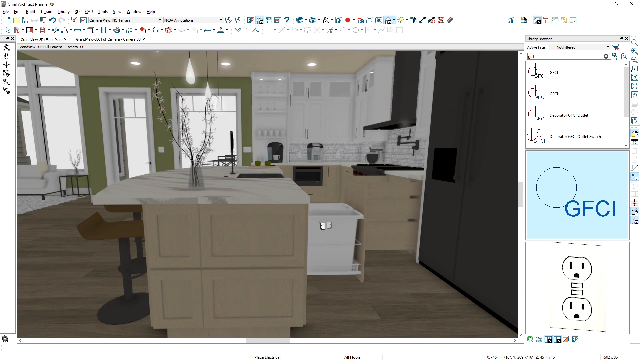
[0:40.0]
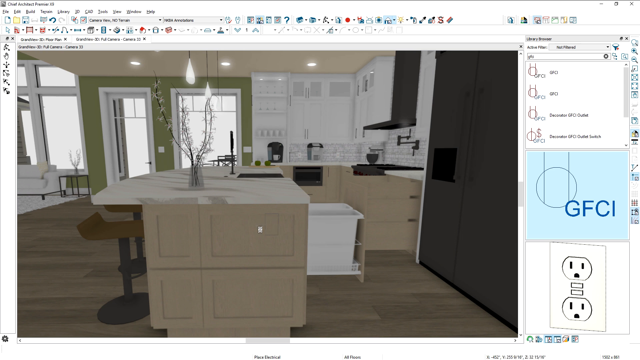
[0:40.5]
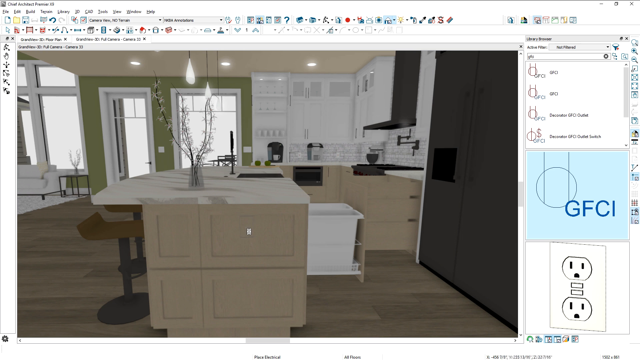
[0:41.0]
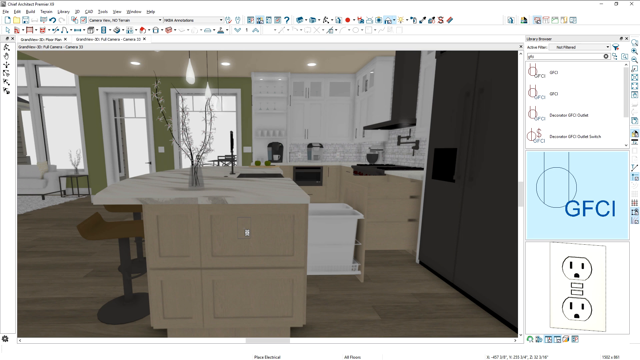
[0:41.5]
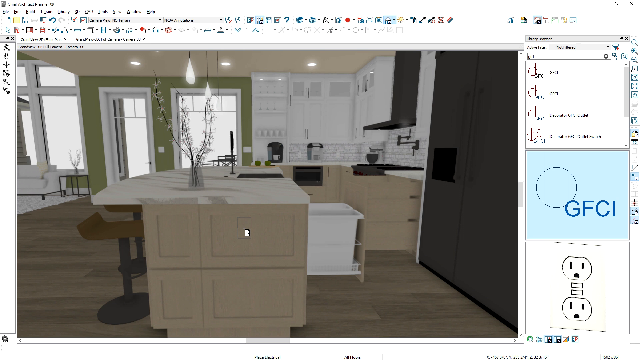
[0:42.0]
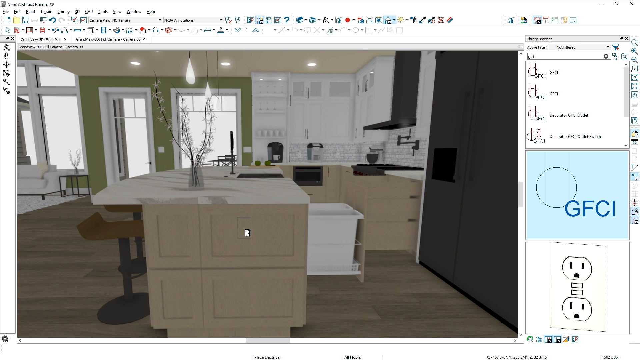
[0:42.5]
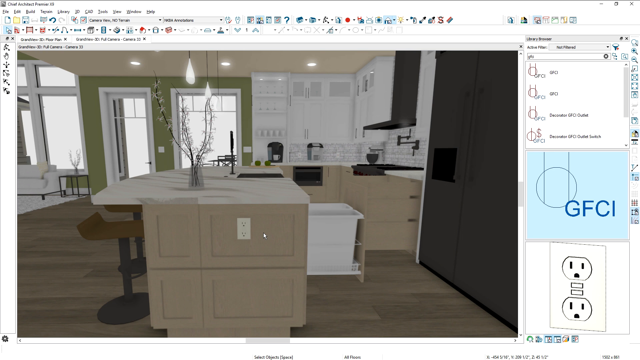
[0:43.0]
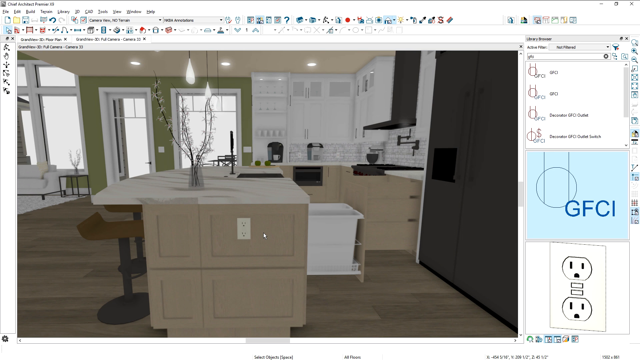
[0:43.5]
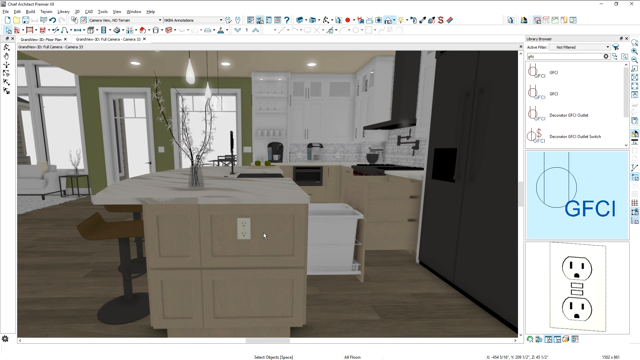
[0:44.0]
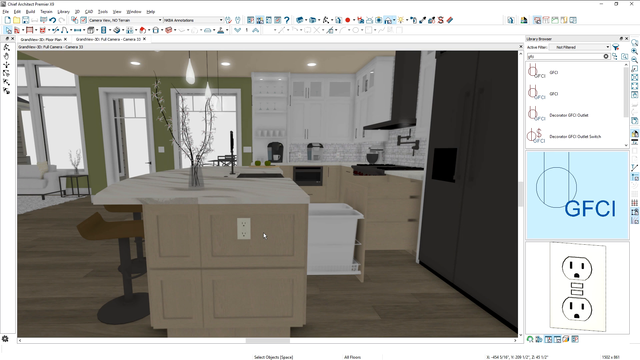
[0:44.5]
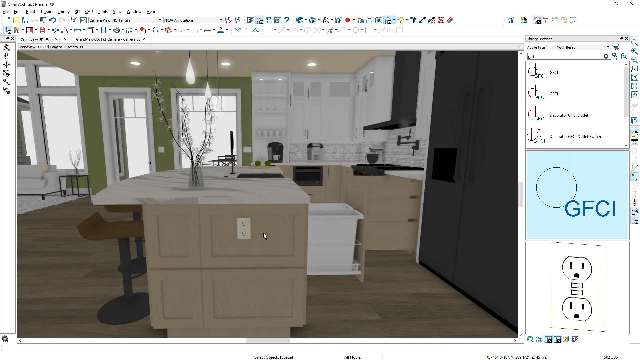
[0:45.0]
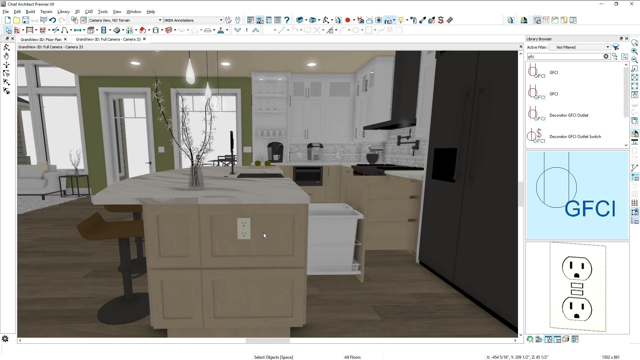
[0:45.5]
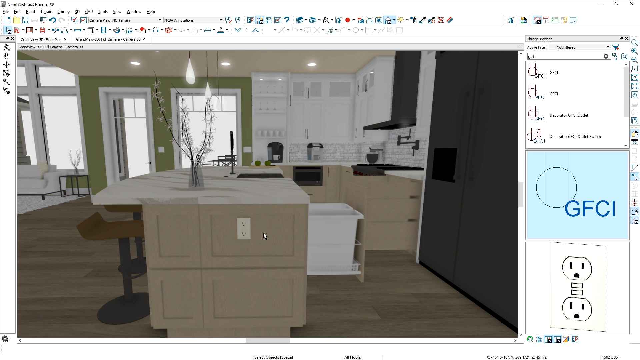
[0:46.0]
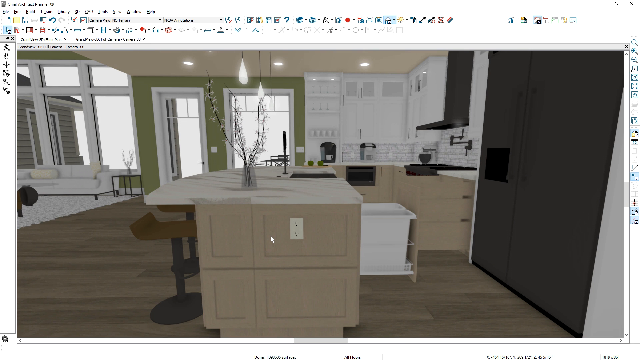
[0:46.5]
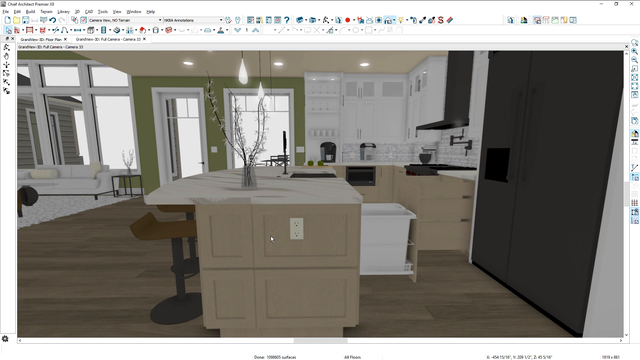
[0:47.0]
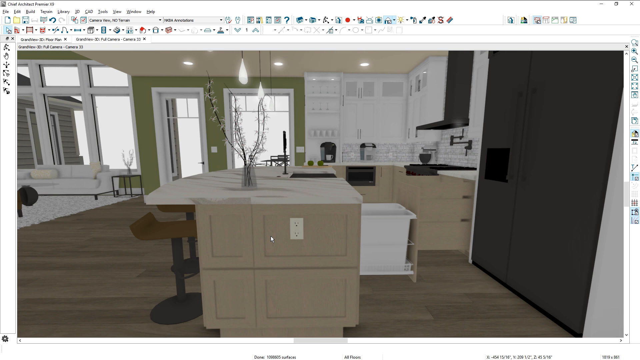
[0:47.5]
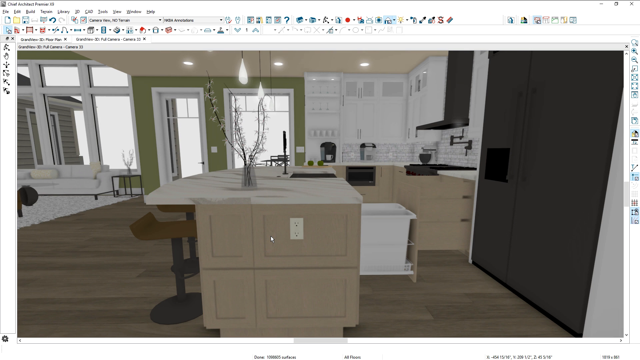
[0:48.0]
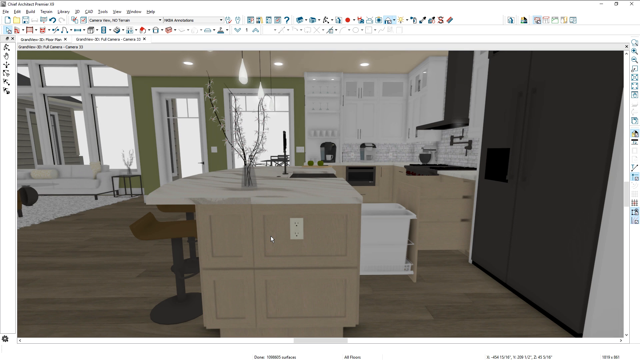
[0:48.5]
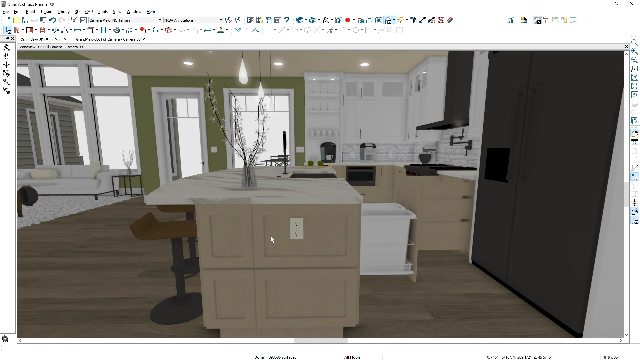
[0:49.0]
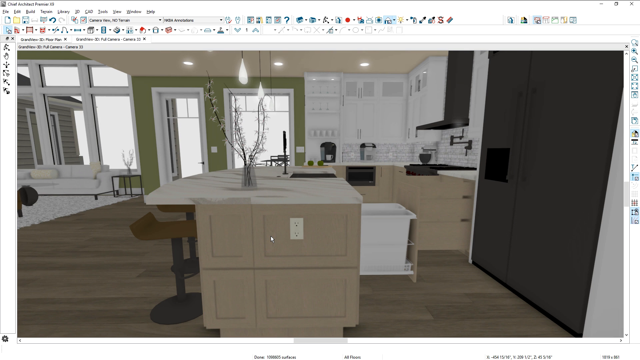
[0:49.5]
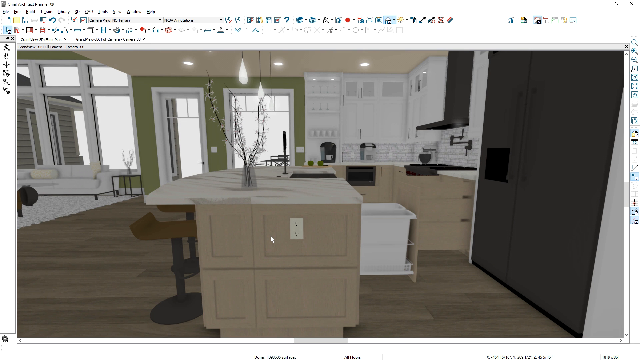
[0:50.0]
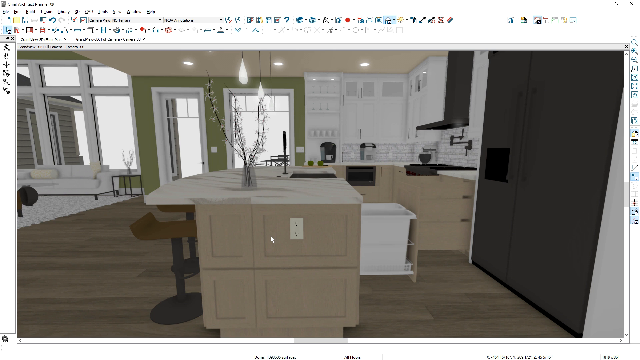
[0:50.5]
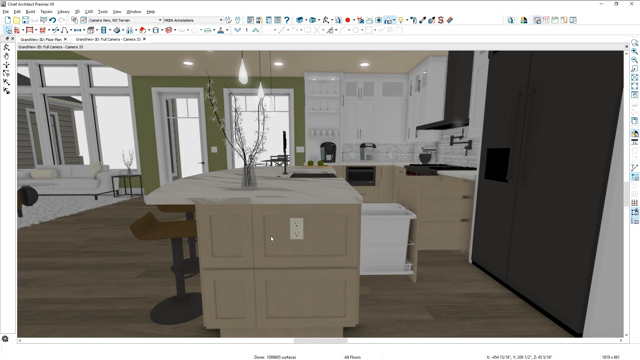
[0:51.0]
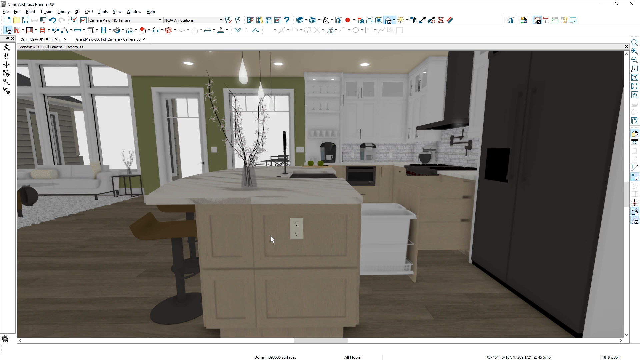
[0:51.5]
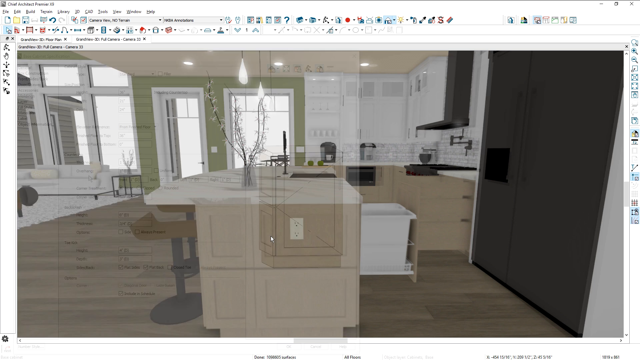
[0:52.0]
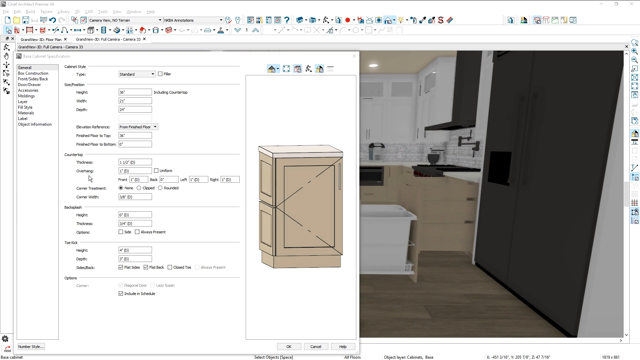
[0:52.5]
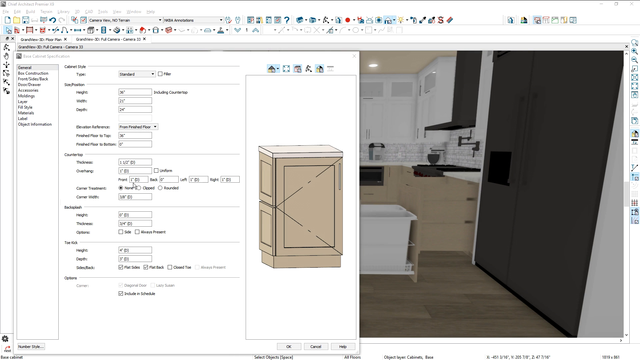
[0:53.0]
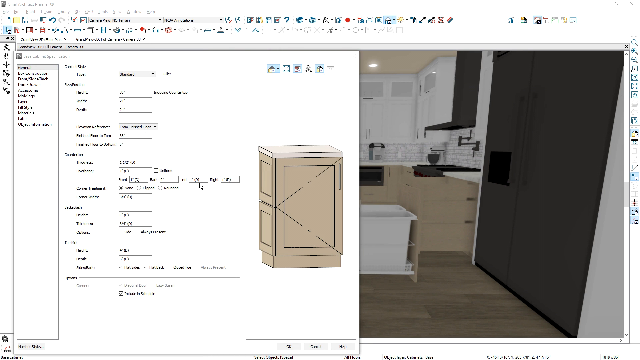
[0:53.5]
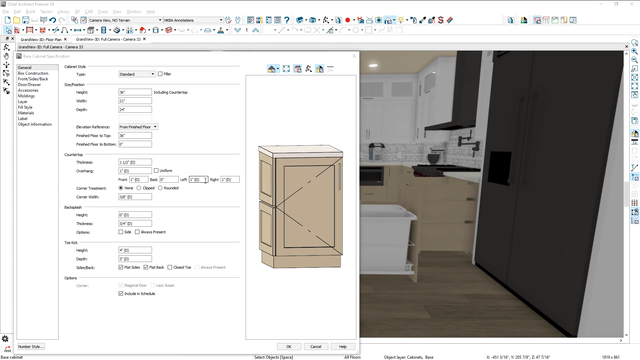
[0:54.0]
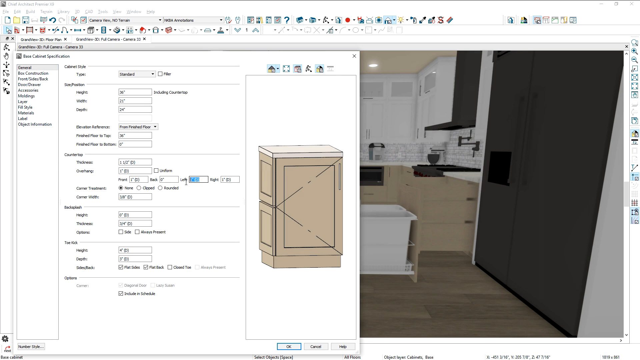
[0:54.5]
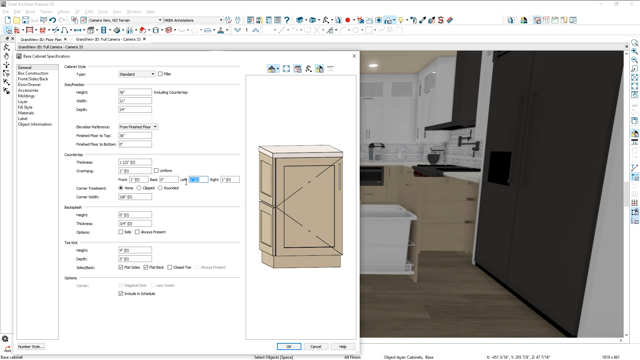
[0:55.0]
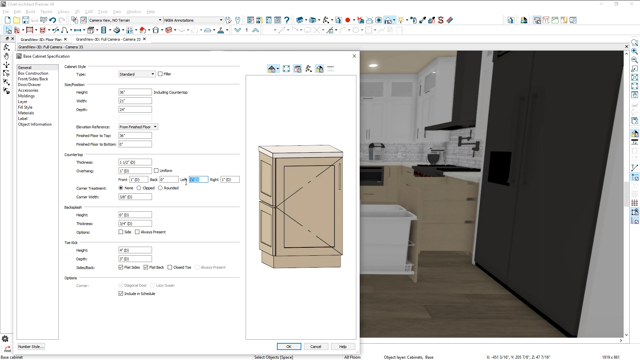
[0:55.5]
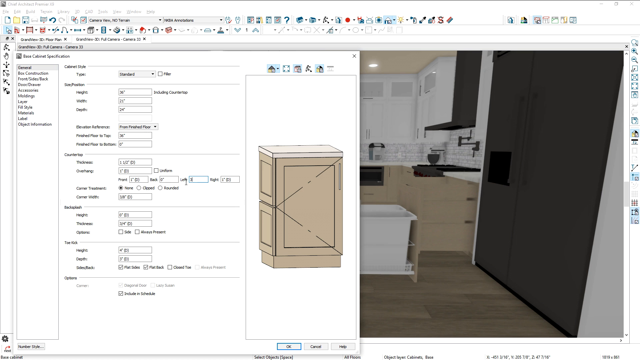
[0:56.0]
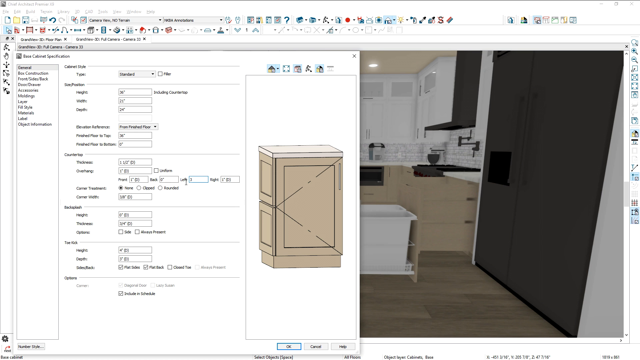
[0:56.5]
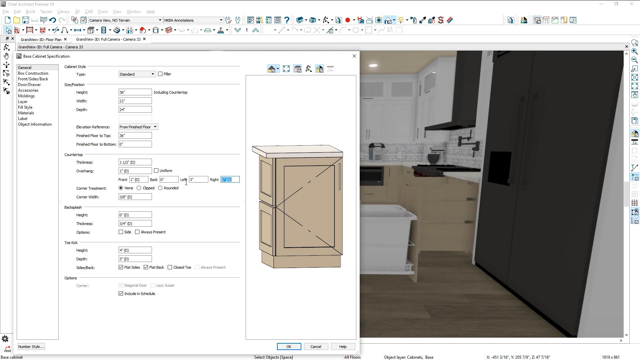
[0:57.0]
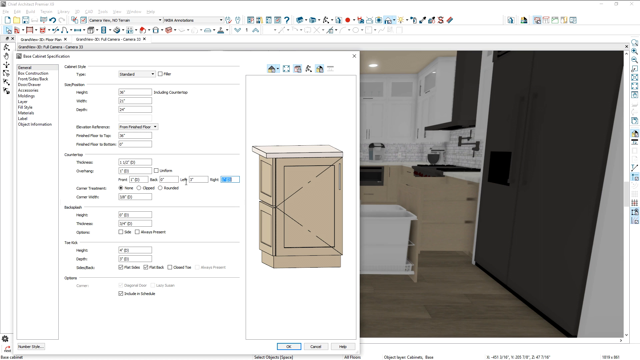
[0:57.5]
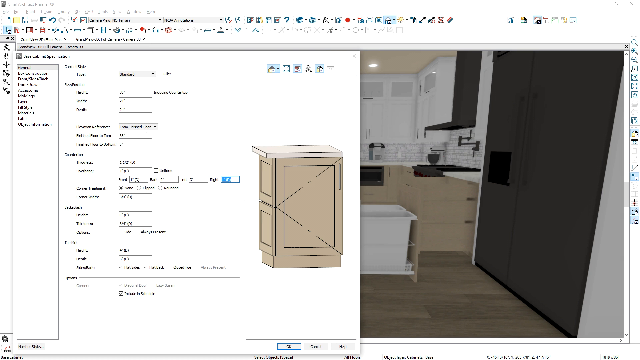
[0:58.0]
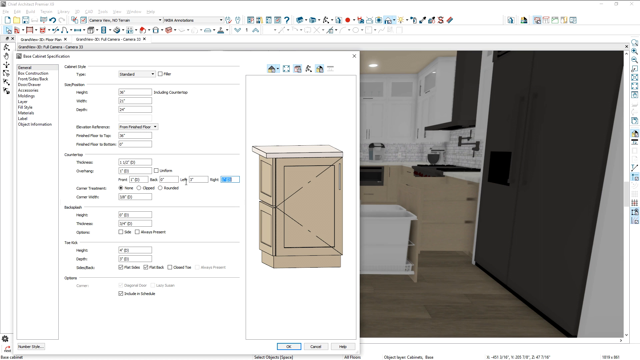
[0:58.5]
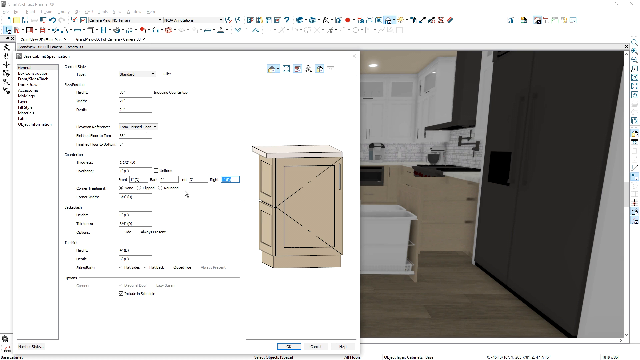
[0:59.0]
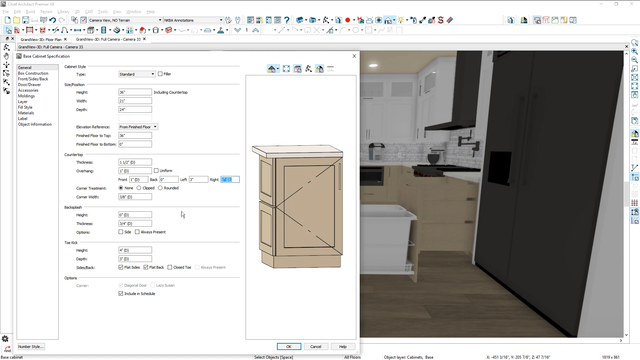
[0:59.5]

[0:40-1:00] A design of the same kitchen is shown, with plugs in front of the bar stools. Someone is editing the house plans and removing some items. The model of the kitchen looks like it is not finished yet. There is a chest of drawers with a small design on it, a rectangle and a square. Lights hang from the ceiling, and other lights are set straight into the ceiling. A drawer at the bottom of the sink or breakfast table can be opened; it looks like a white garbage bin that can be closed so it is hidden from view.